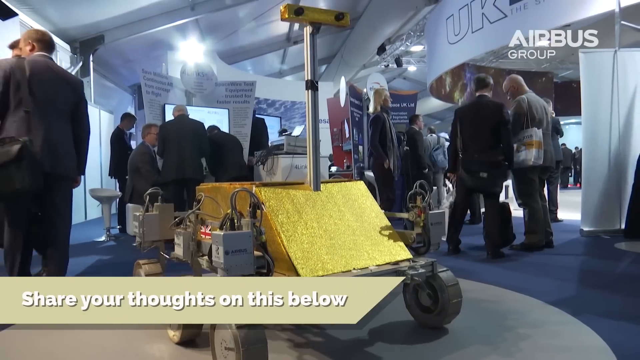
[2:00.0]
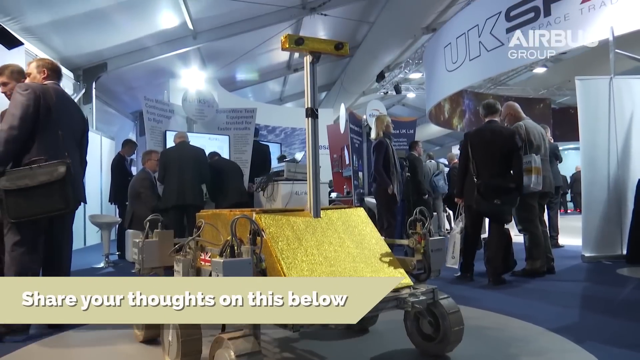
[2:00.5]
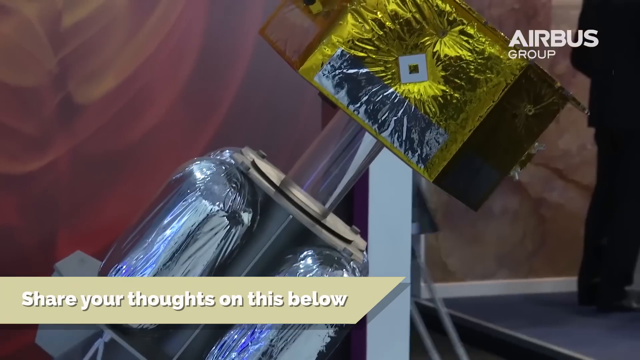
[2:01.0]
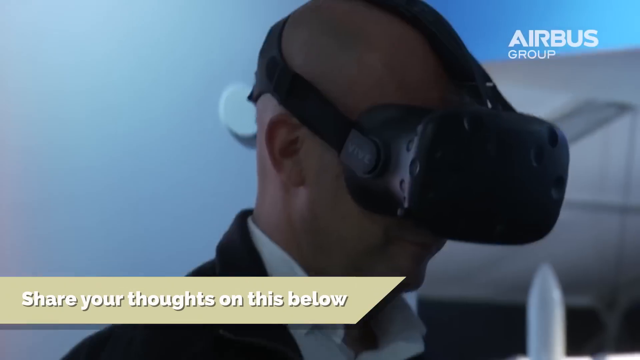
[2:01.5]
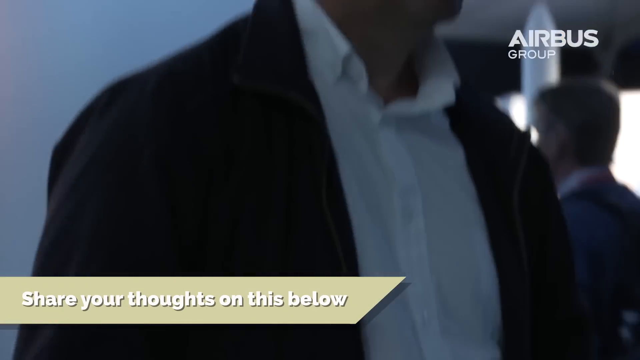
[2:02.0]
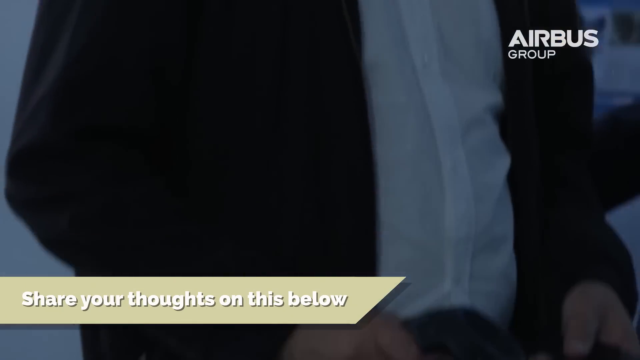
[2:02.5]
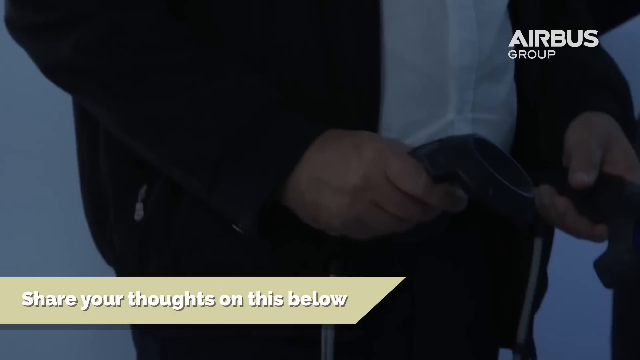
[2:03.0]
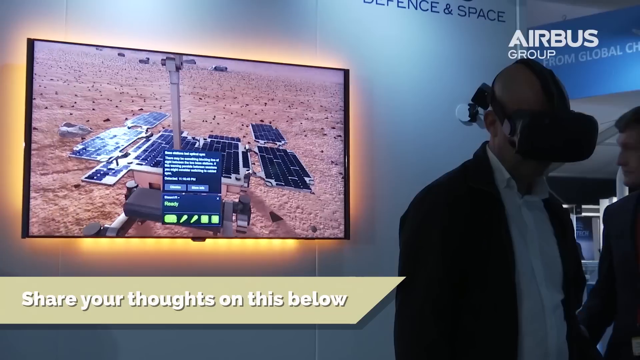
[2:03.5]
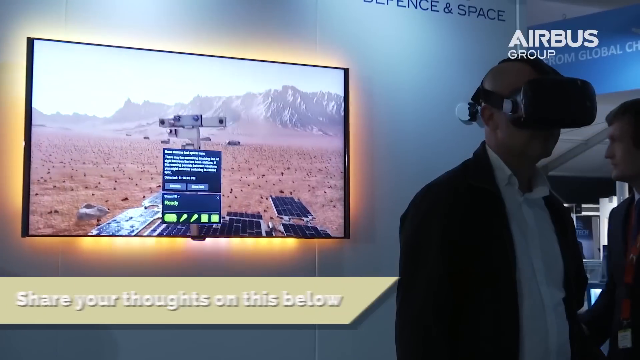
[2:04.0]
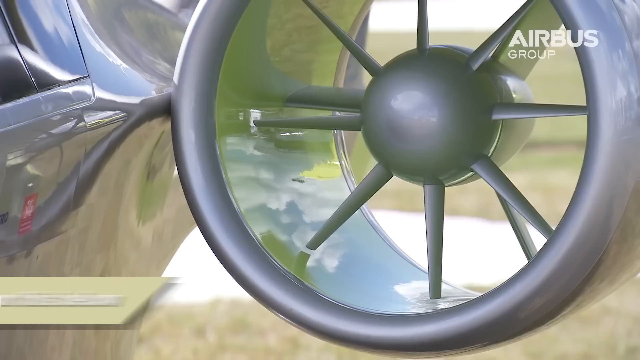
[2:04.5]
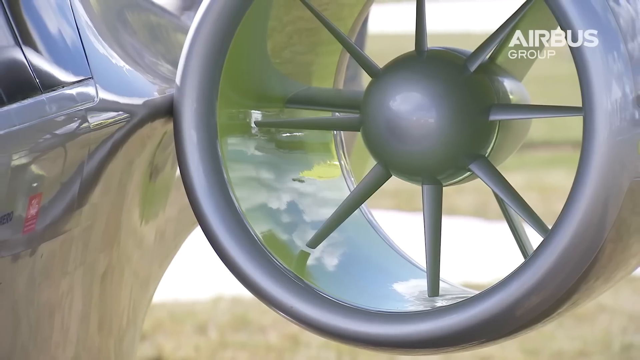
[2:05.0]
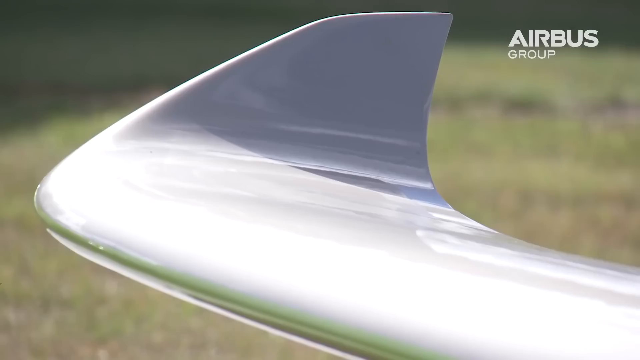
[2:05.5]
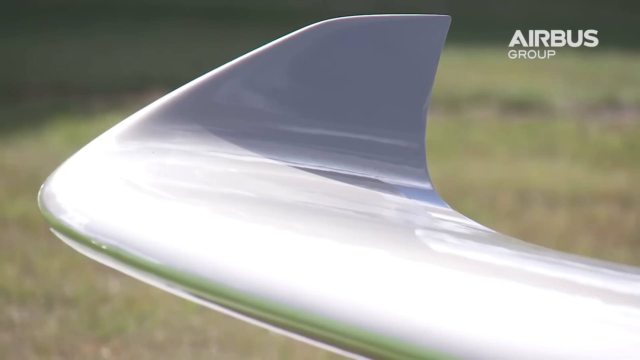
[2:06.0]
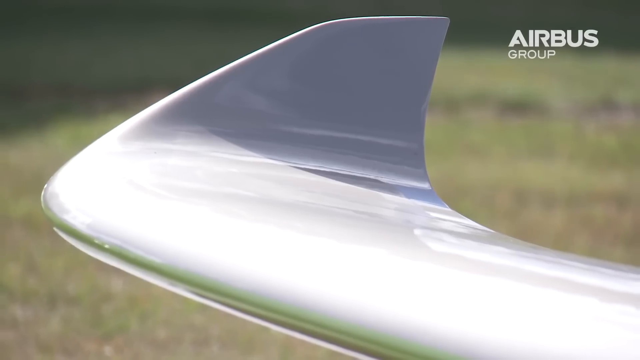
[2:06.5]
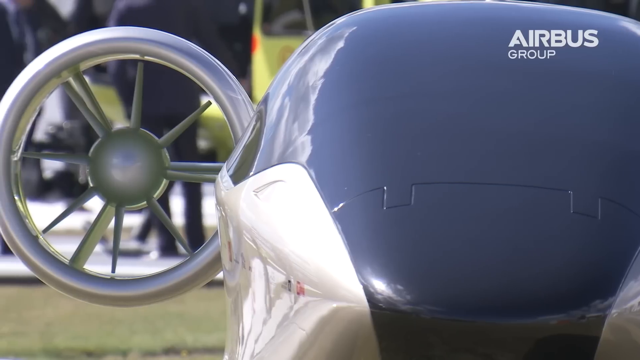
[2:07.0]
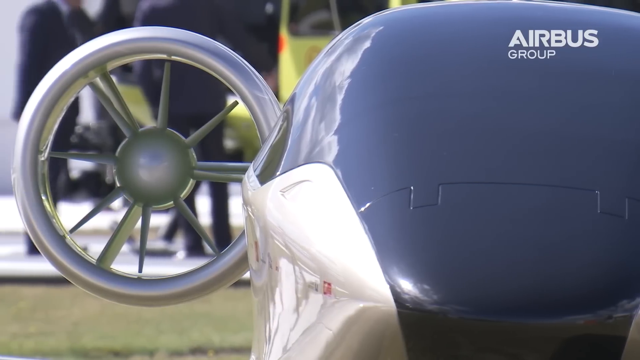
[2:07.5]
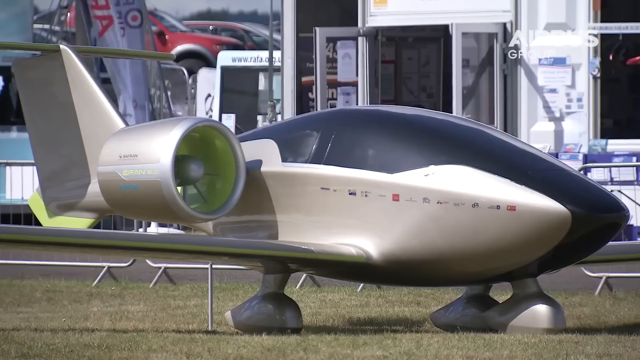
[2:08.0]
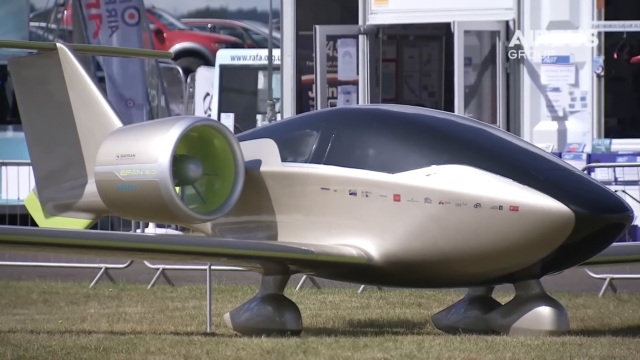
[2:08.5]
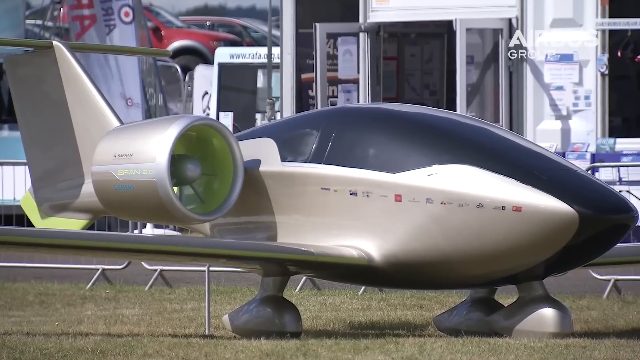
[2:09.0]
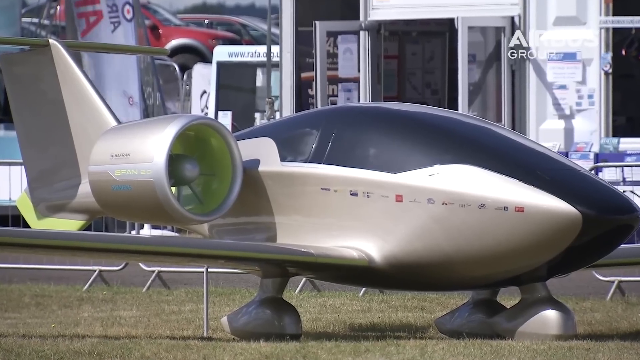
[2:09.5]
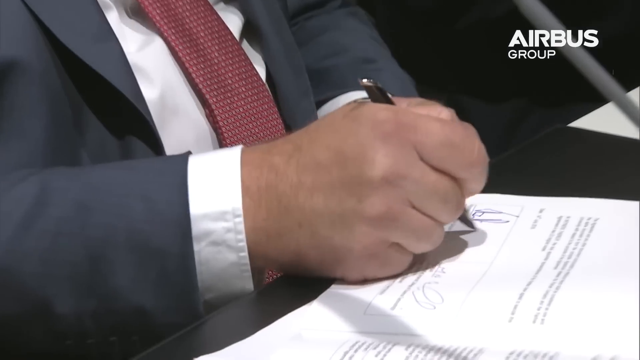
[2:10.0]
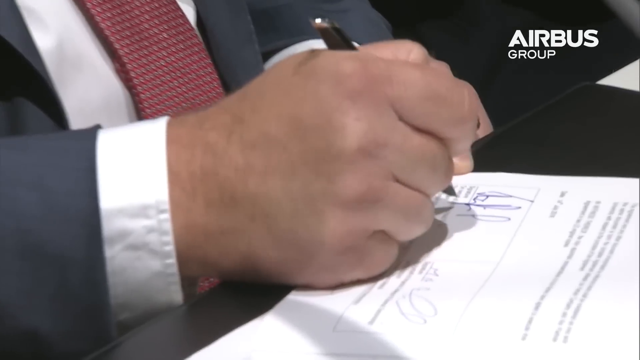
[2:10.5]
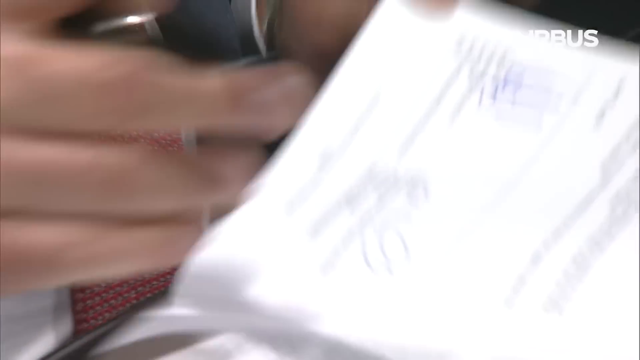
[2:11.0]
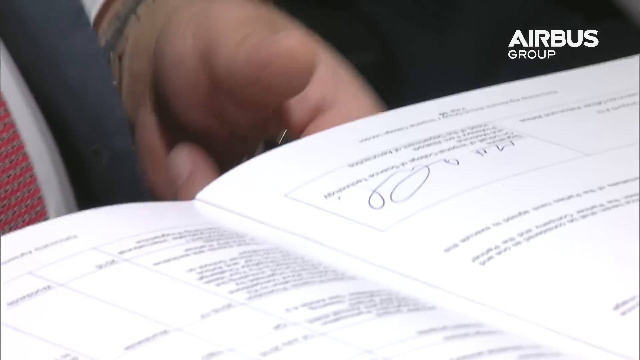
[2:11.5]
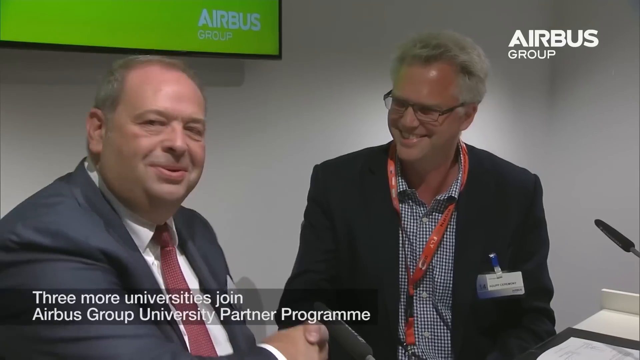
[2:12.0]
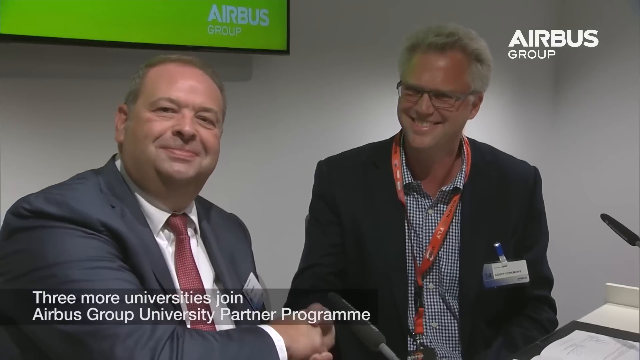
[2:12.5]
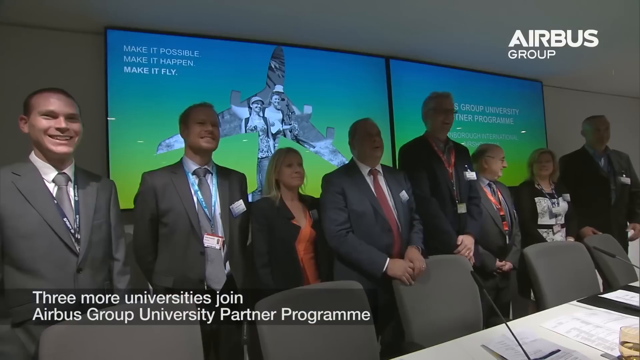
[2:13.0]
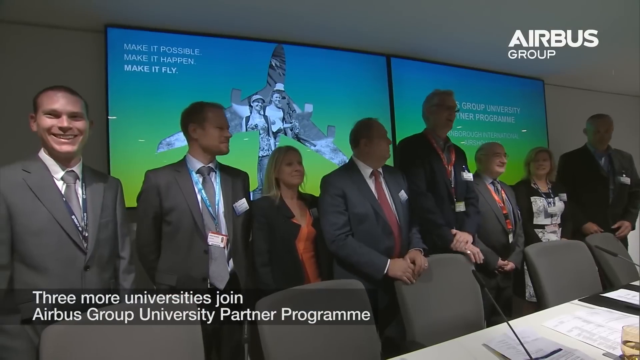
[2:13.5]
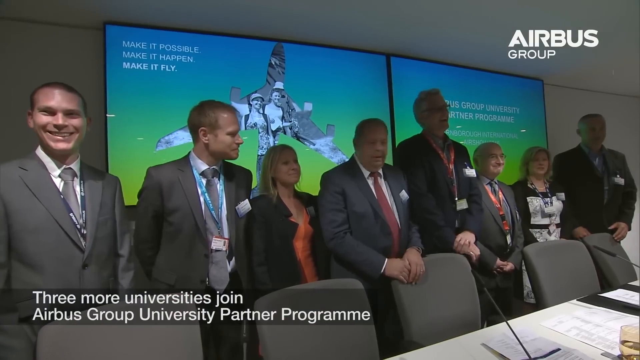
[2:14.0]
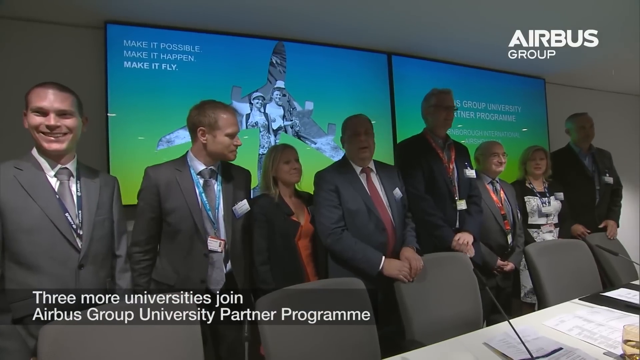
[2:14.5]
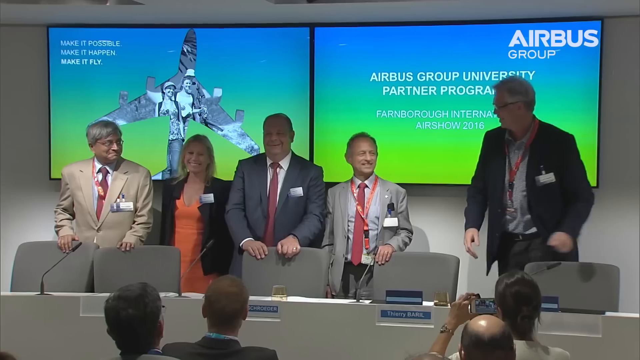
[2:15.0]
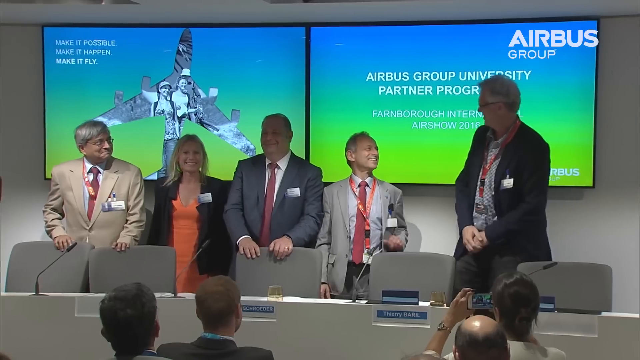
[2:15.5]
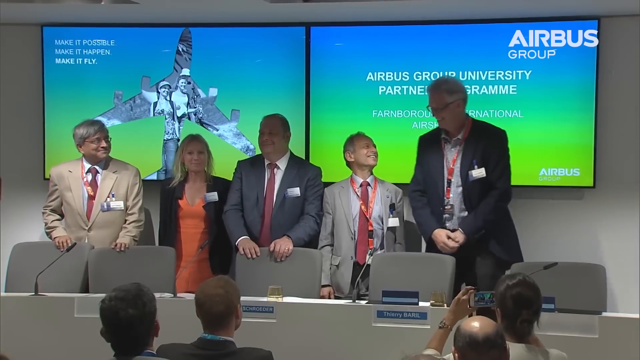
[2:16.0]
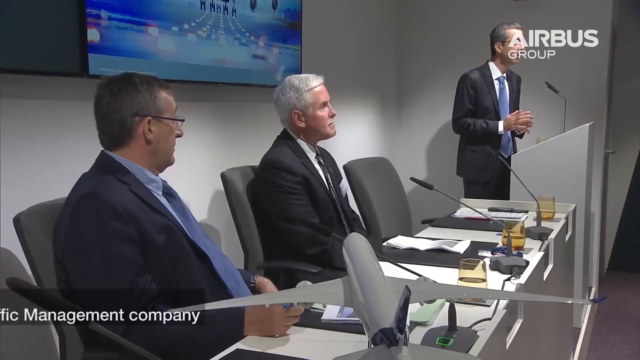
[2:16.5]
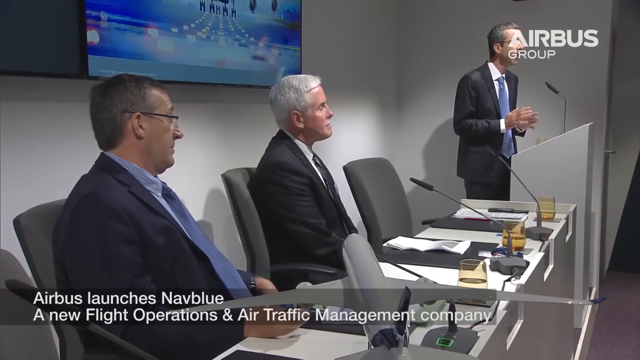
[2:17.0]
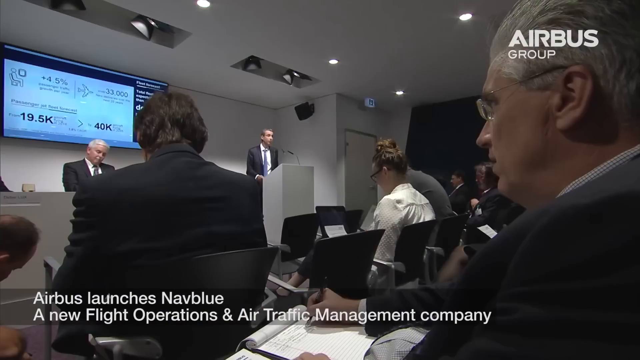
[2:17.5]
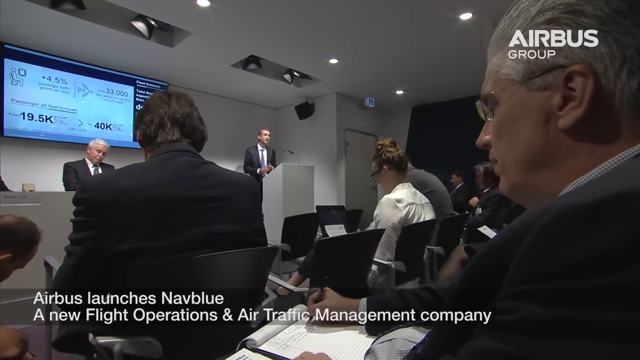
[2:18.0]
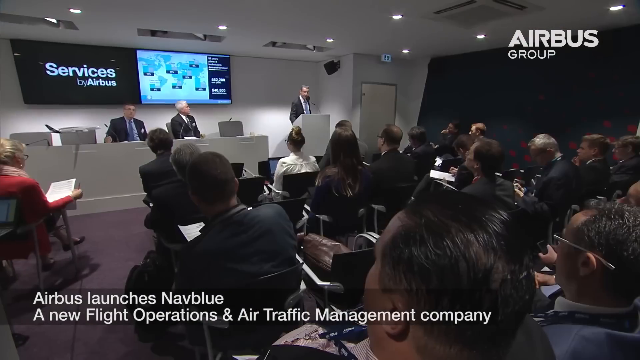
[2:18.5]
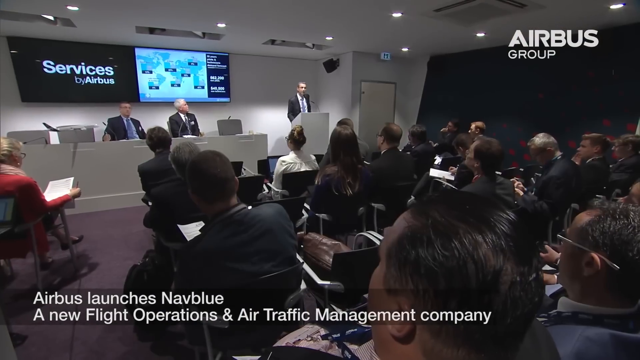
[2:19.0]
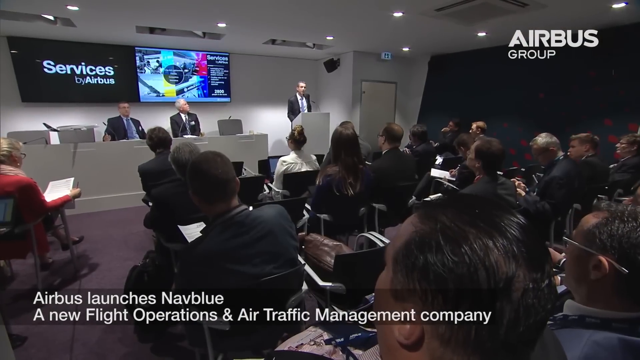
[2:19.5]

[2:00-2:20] A group of people is inside a large room that looks like an exhibit room, with some robots on exhibit and some people. Somebody plays with a virtual reality headset on his head. Next, a model of a small futuristic plane is shown from different angles. Somebody signs a paper that looks like a contract, and two men shake hands. The video cuts to a group of people in a conference room who appear to be having their picture taken, with the words "Three more universities joined Airbus Group University Partner Program" shown on the screen. They happily pose for the picture. A person in a room then talks to a large audience while a video is shown on the screen.